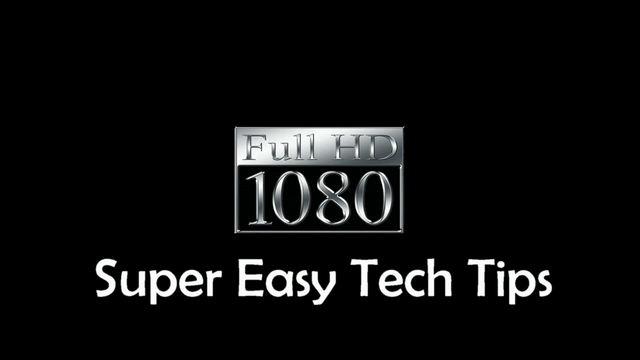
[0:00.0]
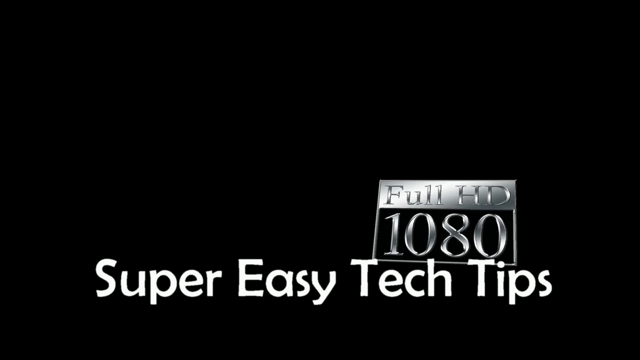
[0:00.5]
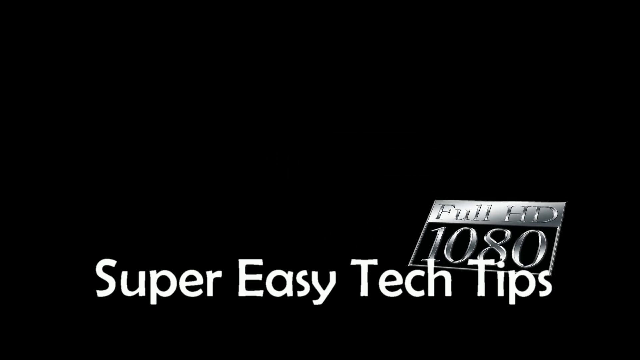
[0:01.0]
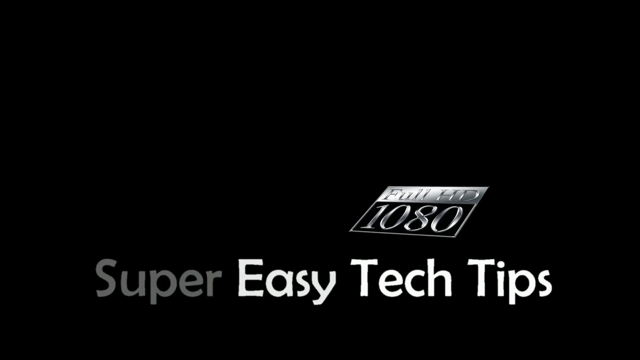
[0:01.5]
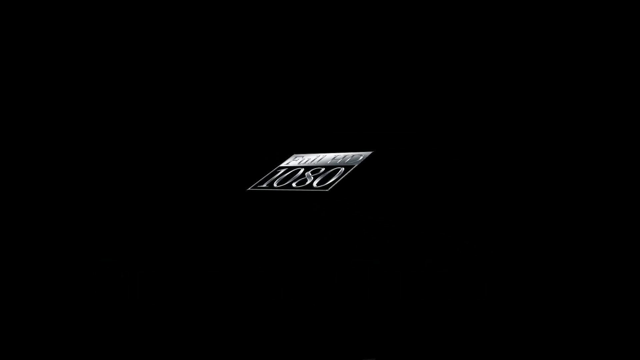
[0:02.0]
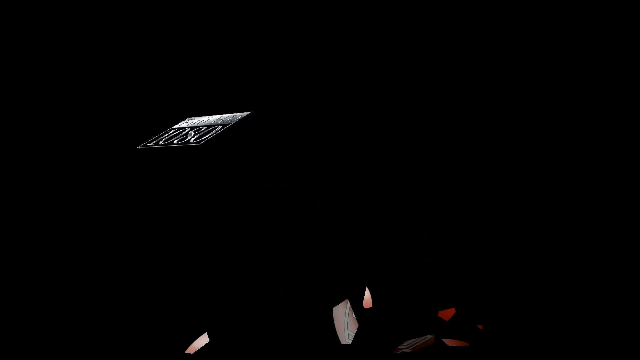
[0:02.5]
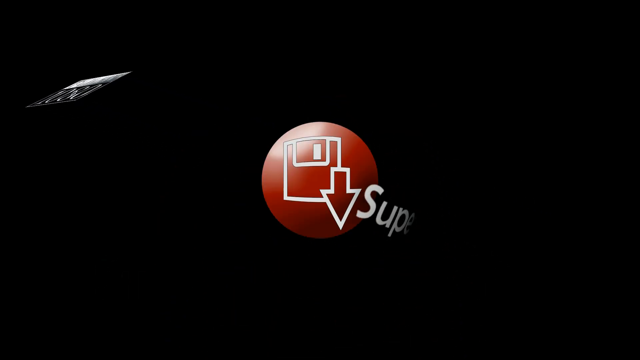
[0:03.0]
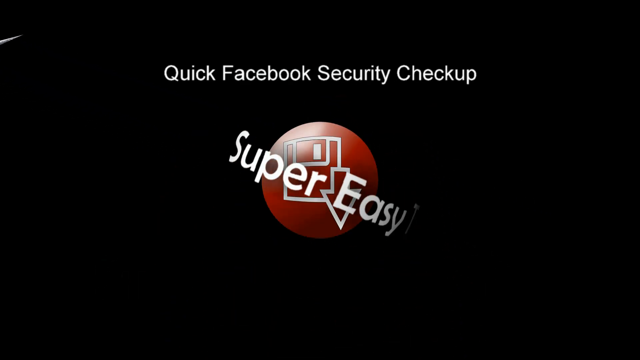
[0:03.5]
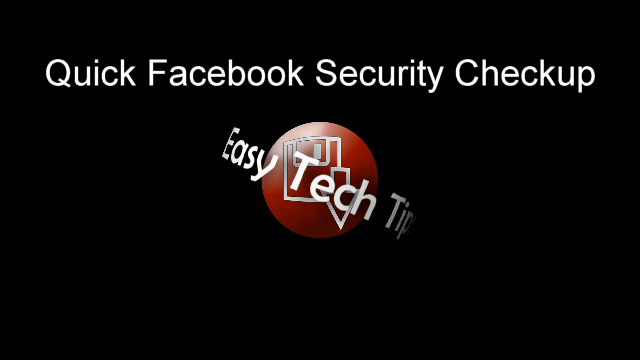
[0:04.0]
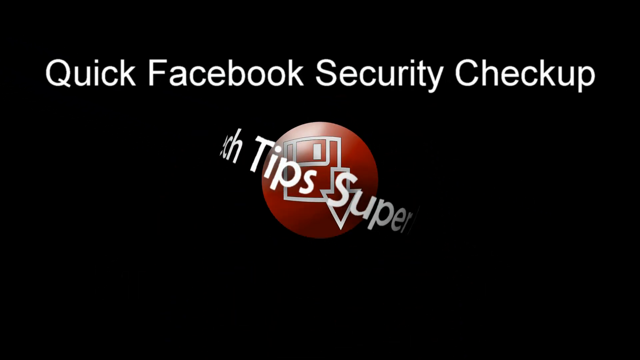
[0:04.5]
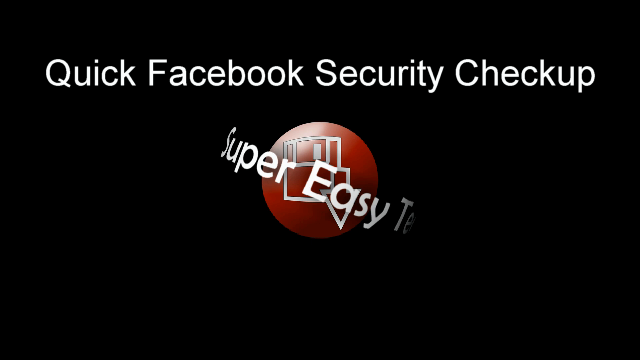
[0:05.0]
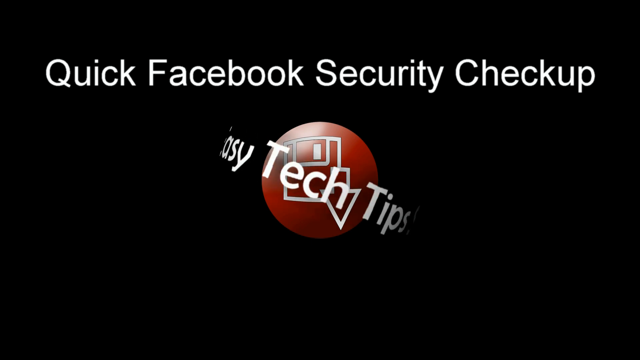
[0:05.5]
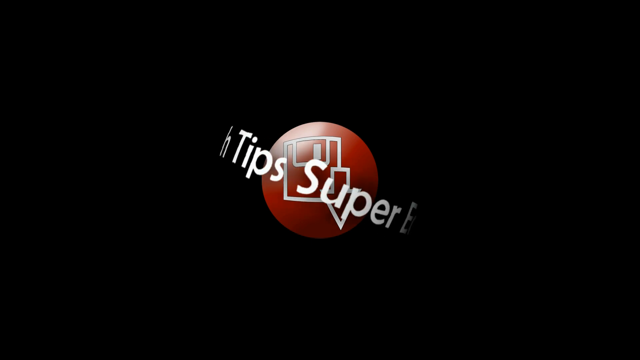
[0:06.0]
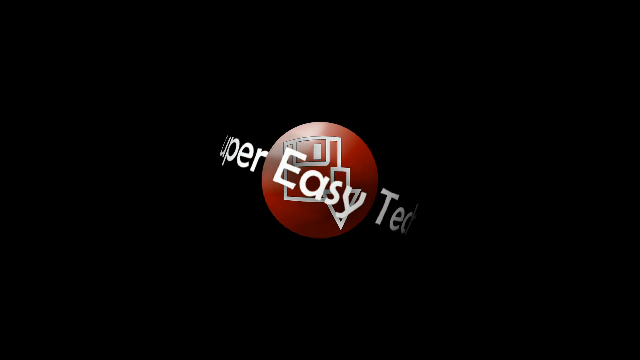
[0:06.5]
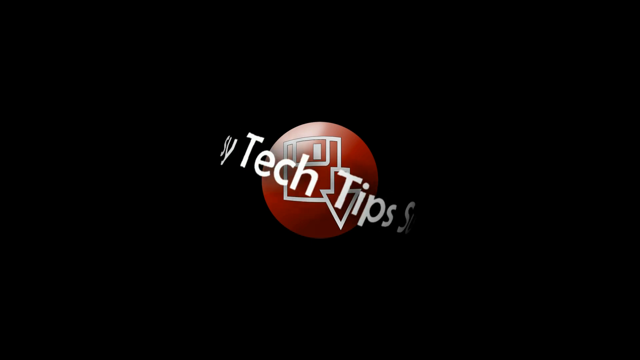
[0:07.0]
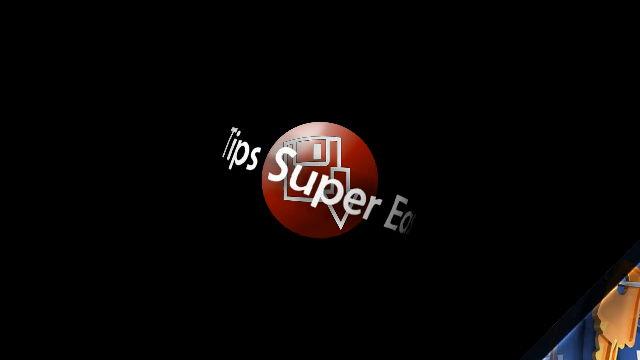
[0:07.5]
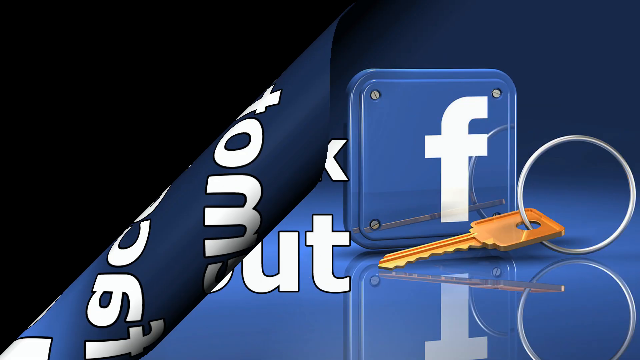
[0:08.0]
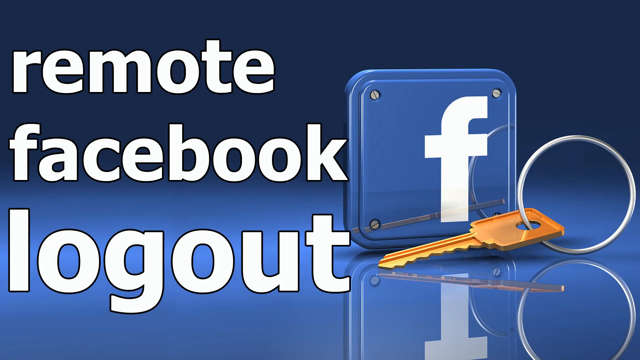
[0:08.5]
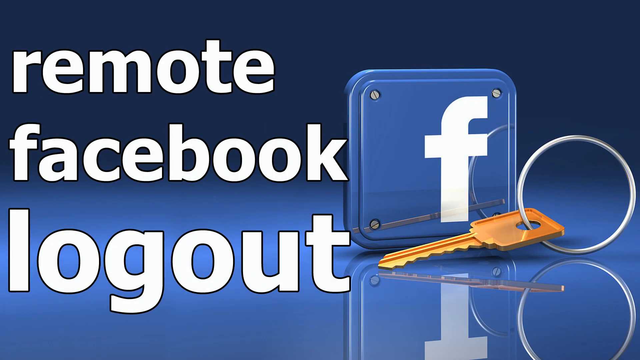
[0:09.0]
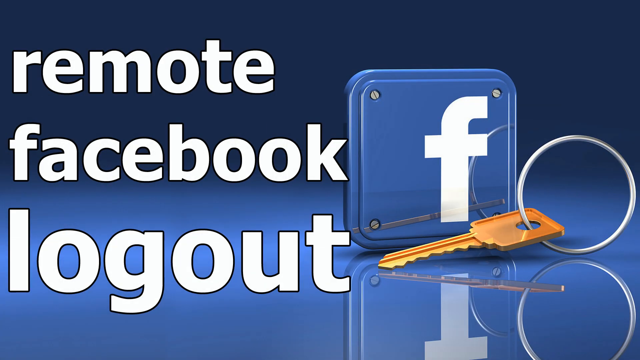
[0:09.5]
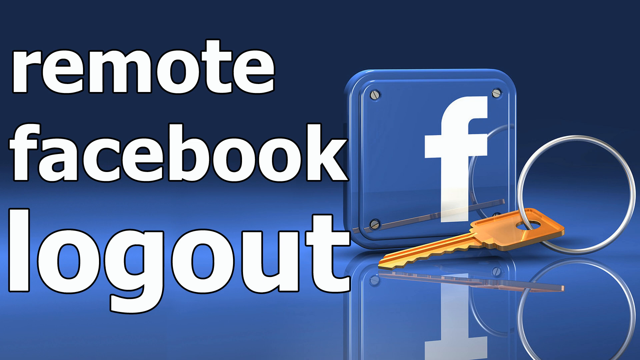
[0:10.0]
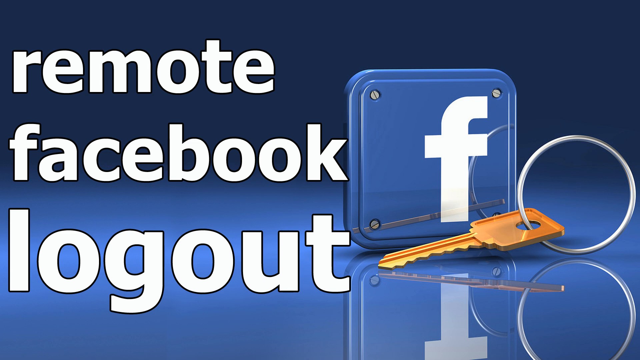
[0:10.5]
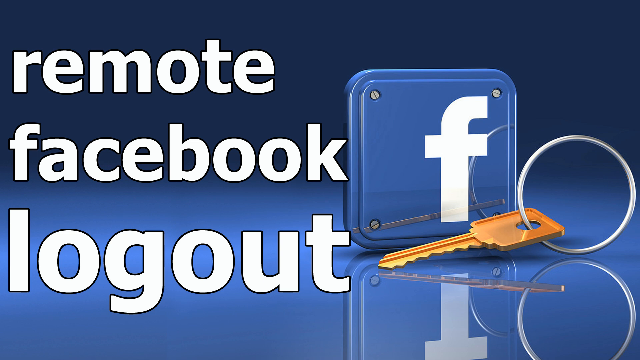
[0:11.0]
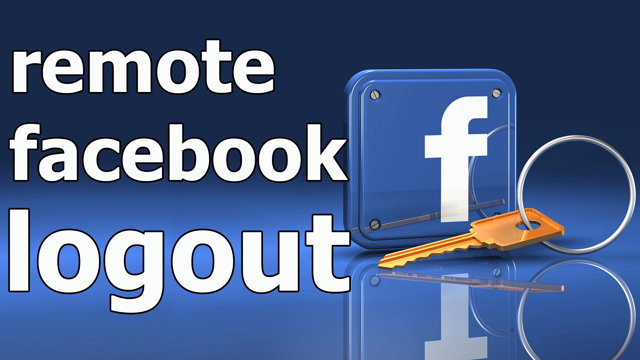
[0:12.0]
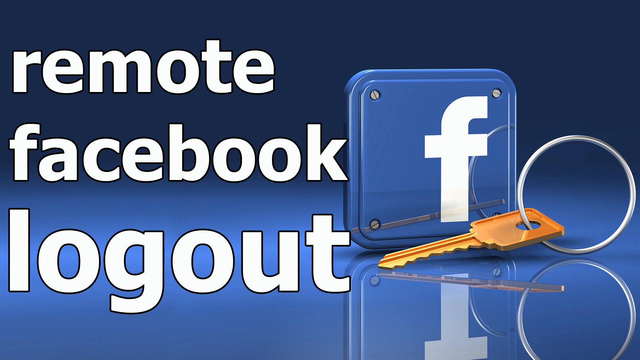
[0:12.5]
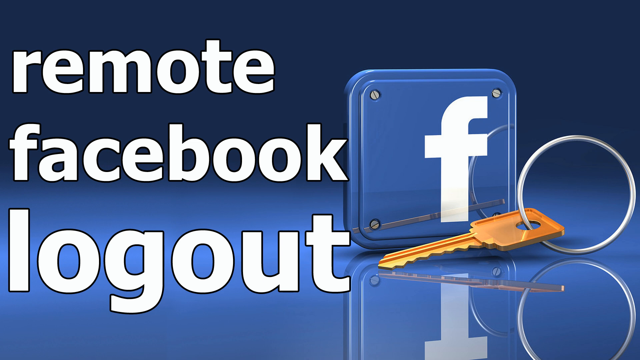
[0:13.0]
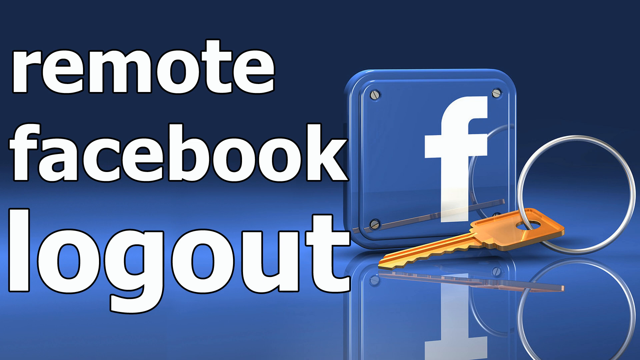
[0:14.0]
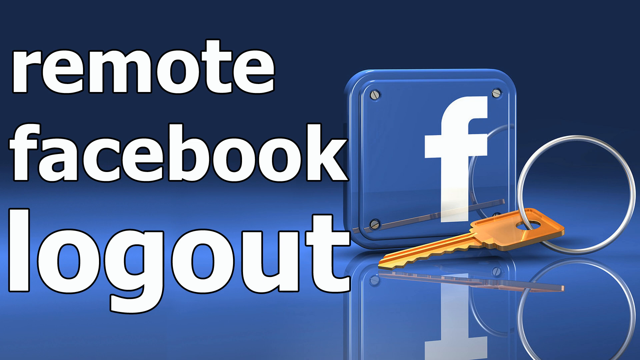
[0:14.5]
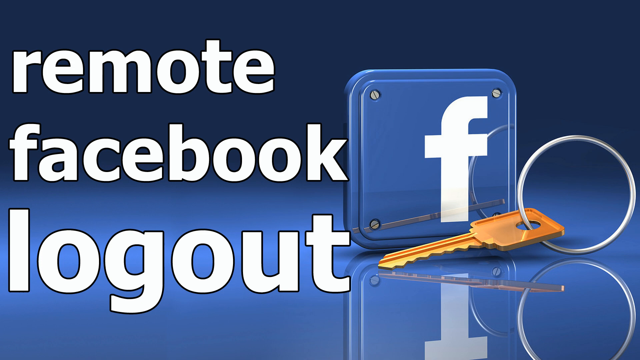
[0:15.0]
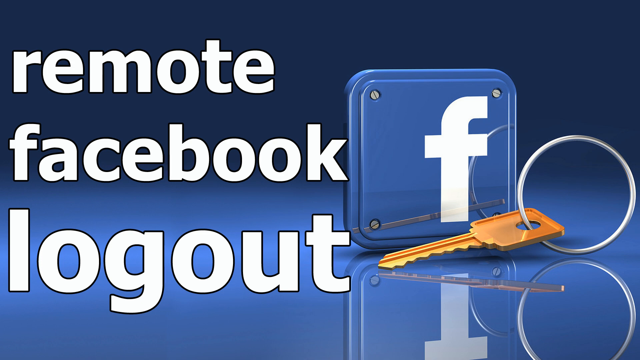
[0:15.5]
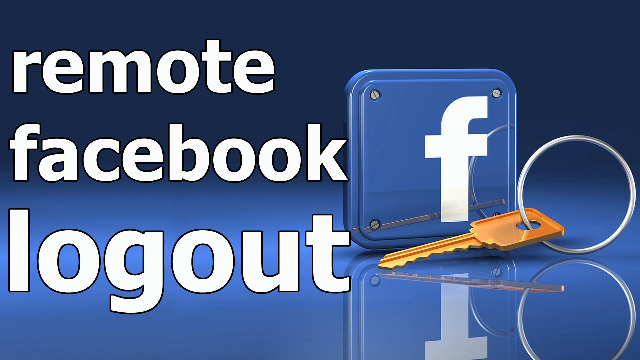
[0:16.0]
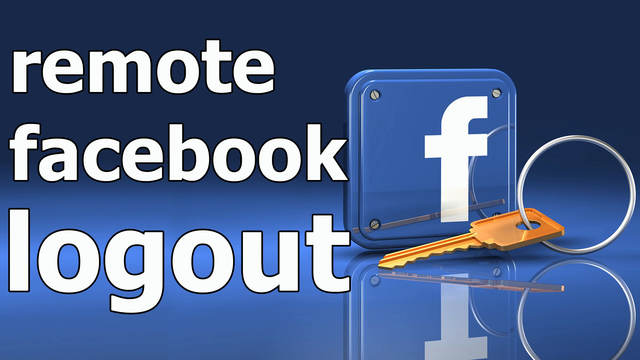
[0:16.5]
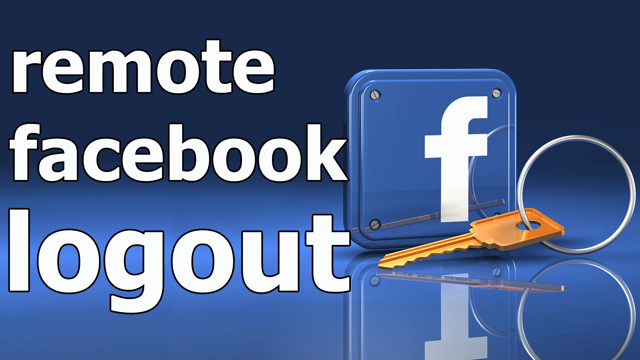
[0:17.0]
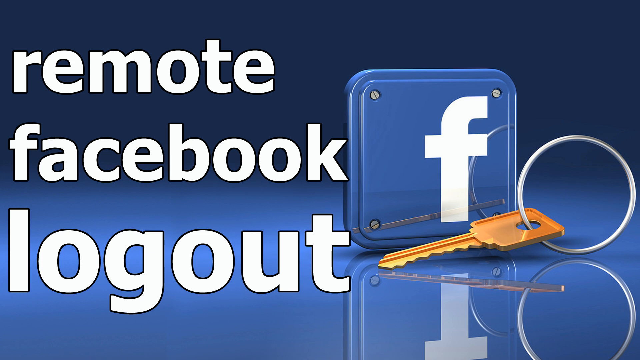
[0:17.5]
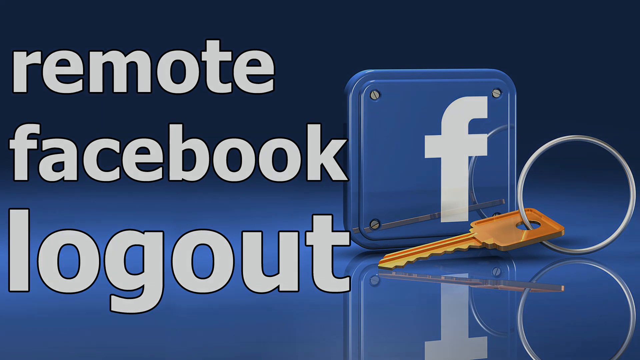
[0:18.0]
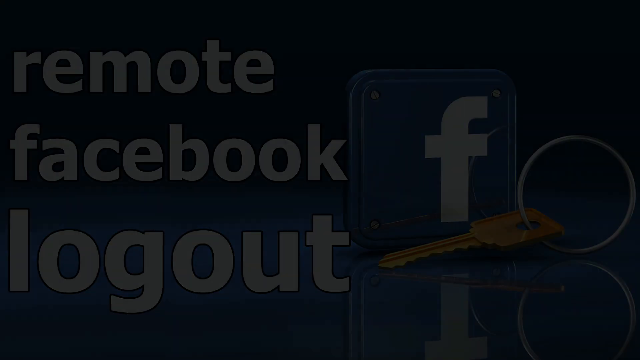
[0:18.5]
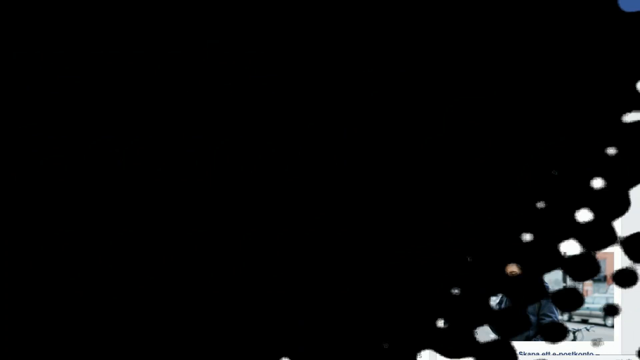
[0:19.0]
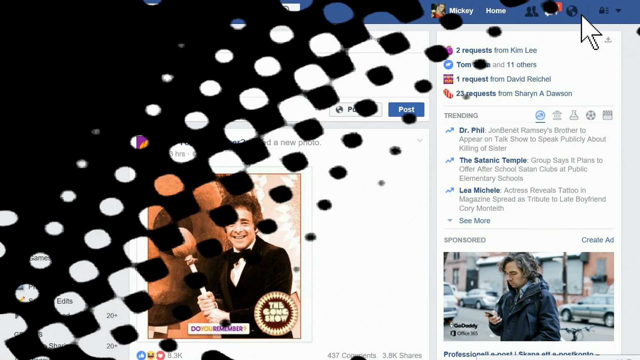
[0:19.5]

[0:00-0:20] The video appears to be very simple, possibly made with an easy-to-learn program like Windows Movie Maker. First, a 1080p Full HD logo is shown. A title follows that seems to be the name of a YouTube channel, "Super Easy Tech Tips", leading into what appears to be a tutorial on quickly strengthening the security of a Facebook account with some tips. The background is black for a second, with very simple white text and a simple icon of a save button in the center. Then a blue background appears with the Facebook logo, a key modeled in 3D, and a title that says "remote facebook logout."